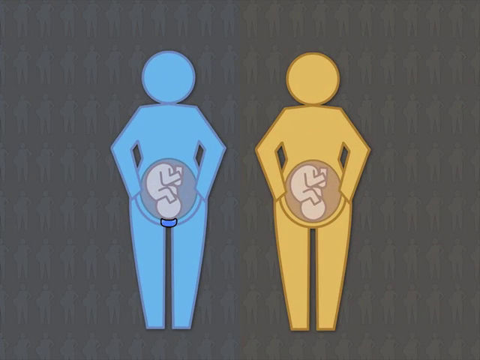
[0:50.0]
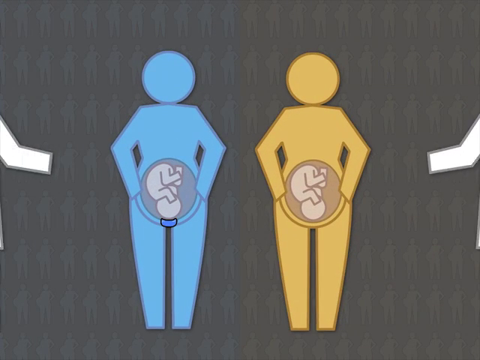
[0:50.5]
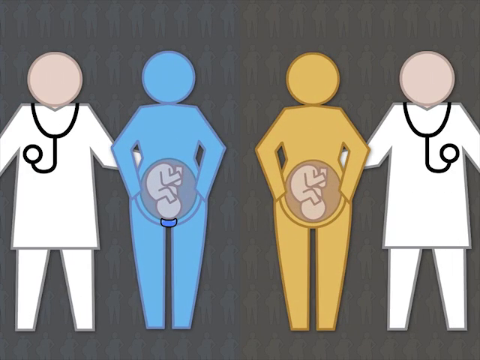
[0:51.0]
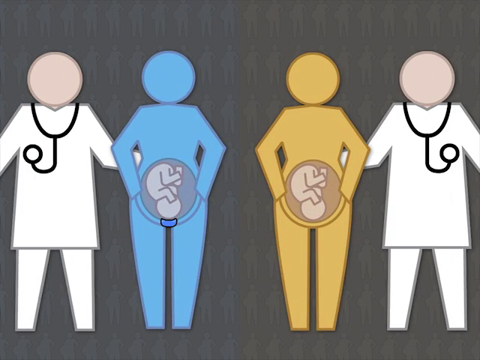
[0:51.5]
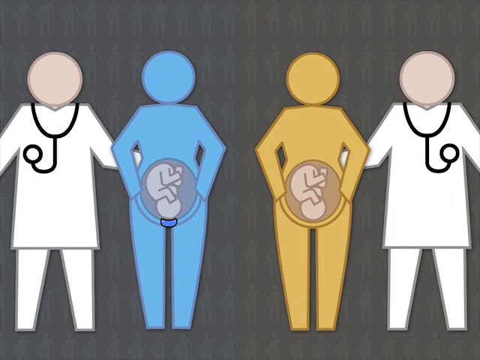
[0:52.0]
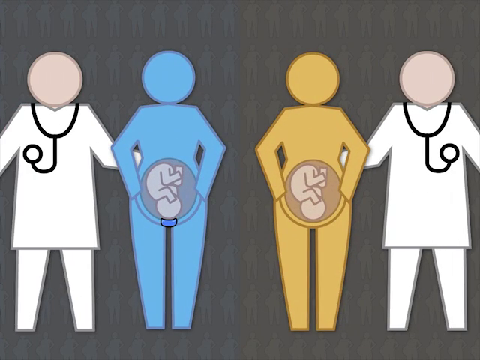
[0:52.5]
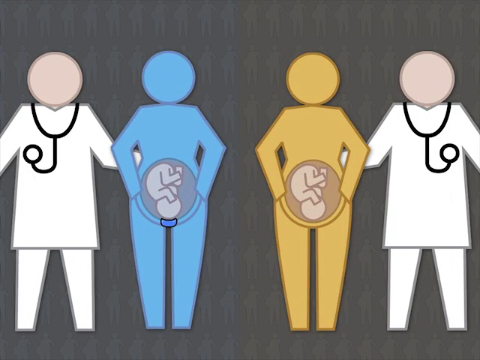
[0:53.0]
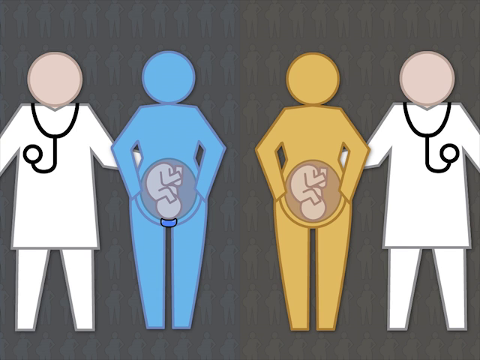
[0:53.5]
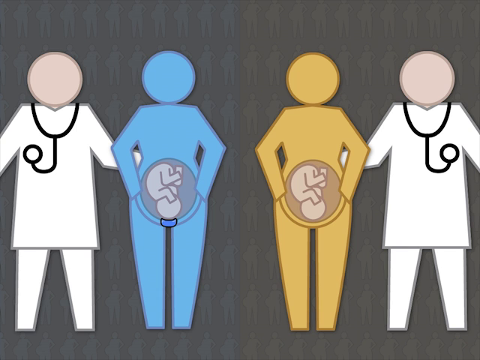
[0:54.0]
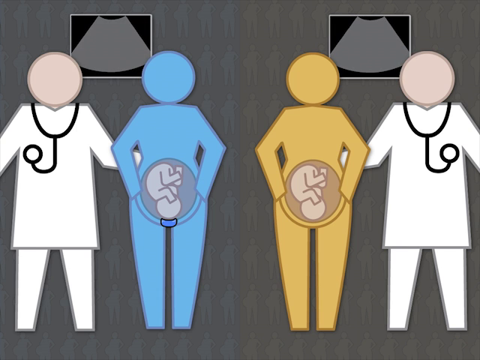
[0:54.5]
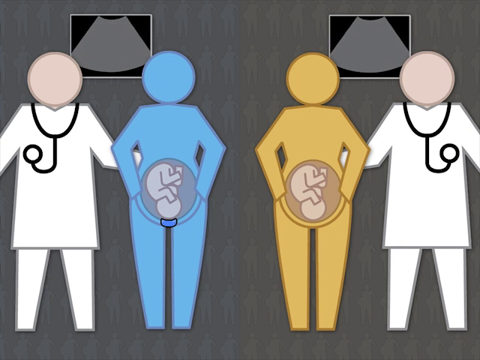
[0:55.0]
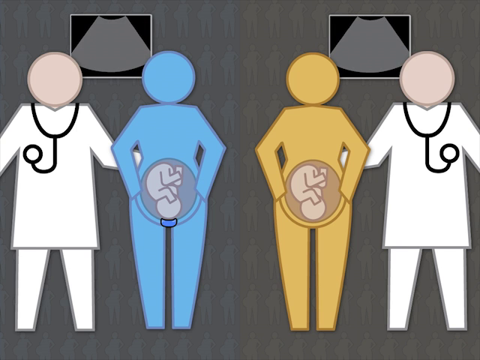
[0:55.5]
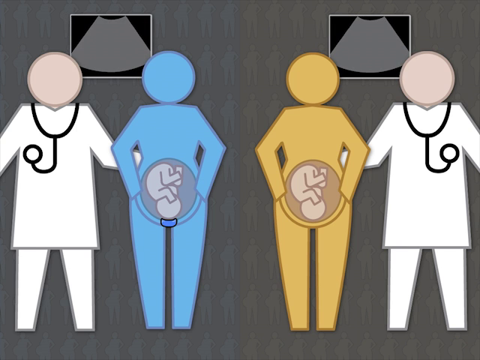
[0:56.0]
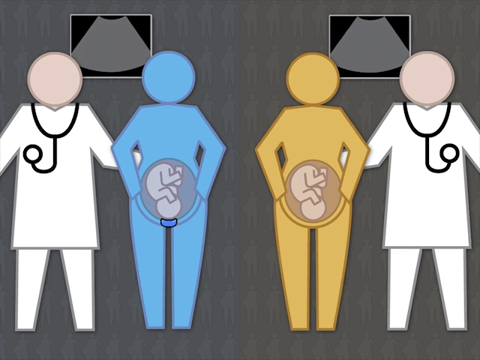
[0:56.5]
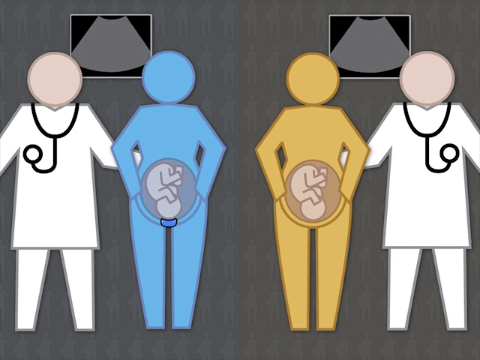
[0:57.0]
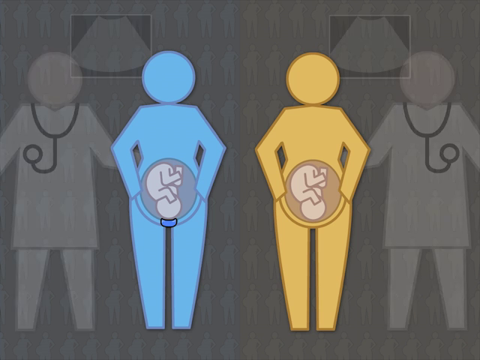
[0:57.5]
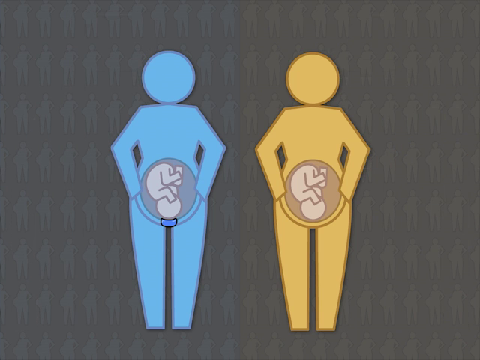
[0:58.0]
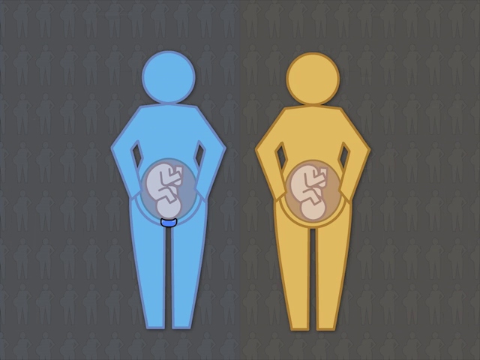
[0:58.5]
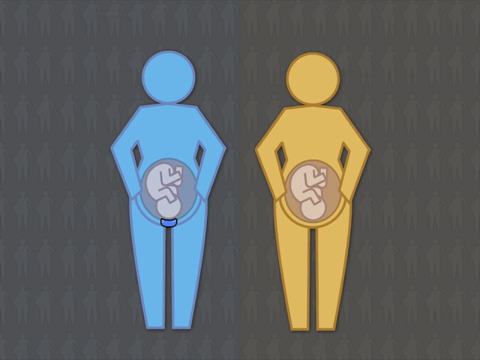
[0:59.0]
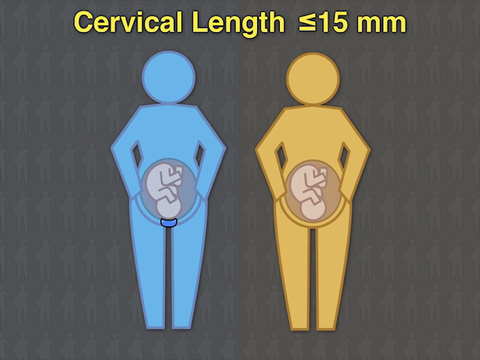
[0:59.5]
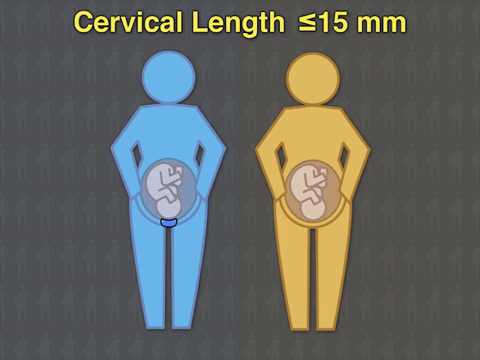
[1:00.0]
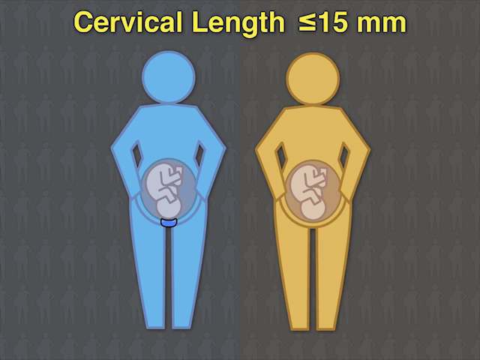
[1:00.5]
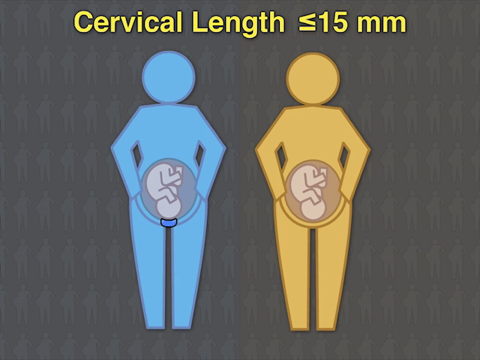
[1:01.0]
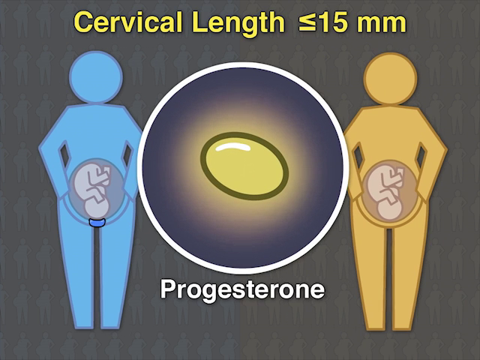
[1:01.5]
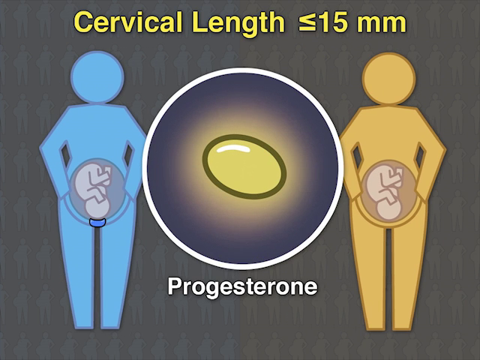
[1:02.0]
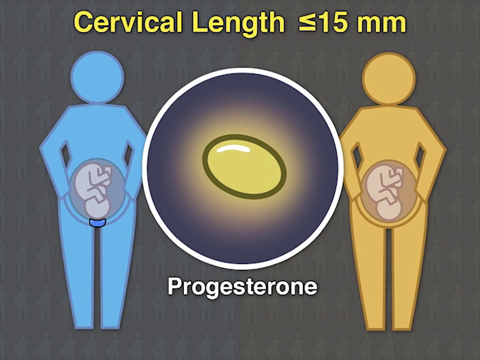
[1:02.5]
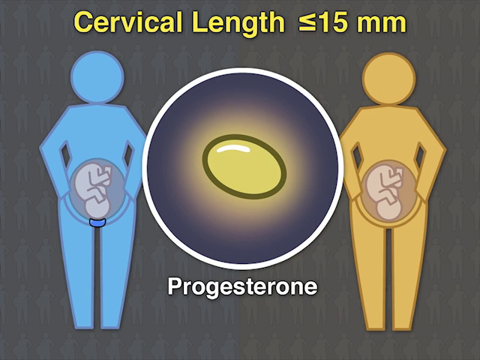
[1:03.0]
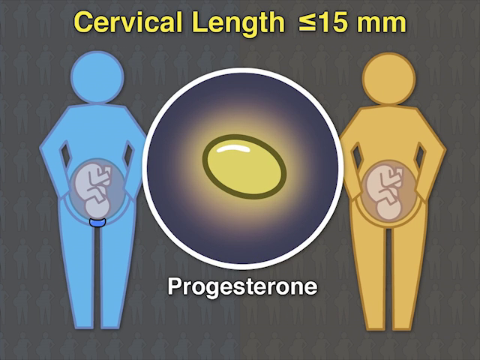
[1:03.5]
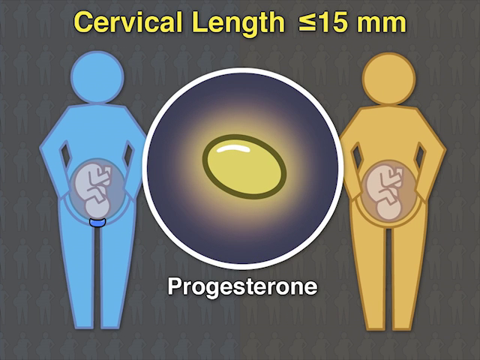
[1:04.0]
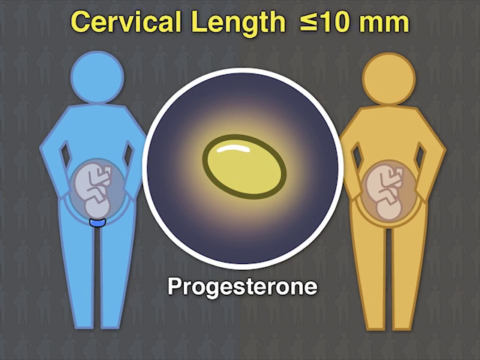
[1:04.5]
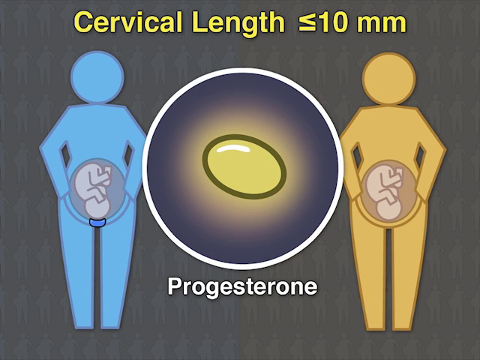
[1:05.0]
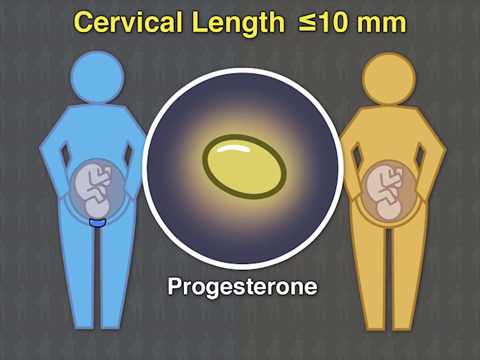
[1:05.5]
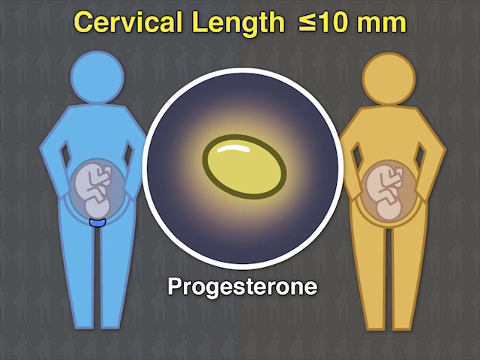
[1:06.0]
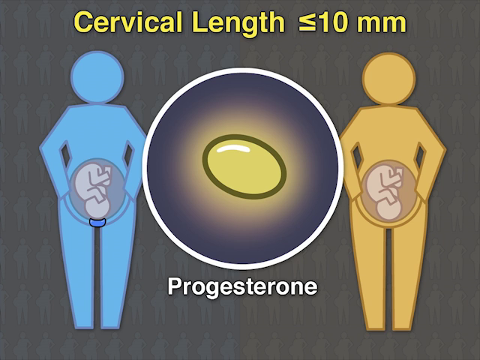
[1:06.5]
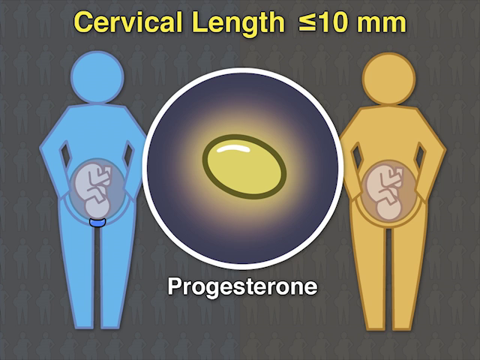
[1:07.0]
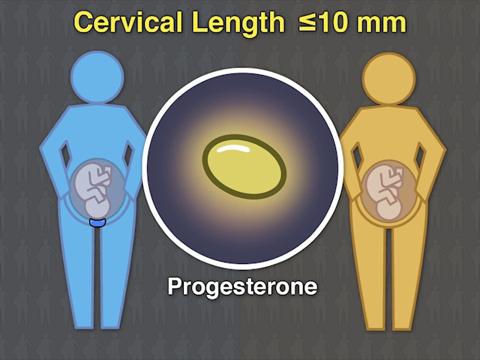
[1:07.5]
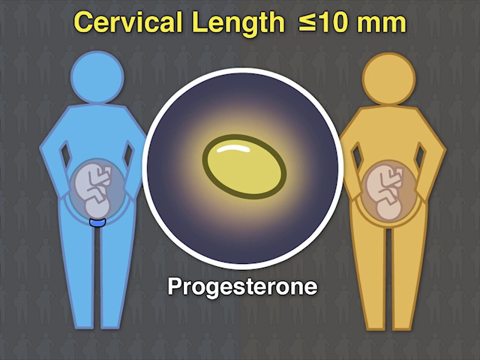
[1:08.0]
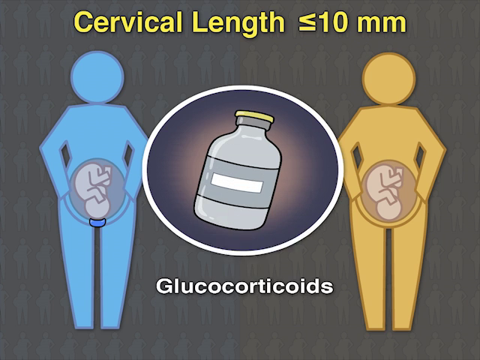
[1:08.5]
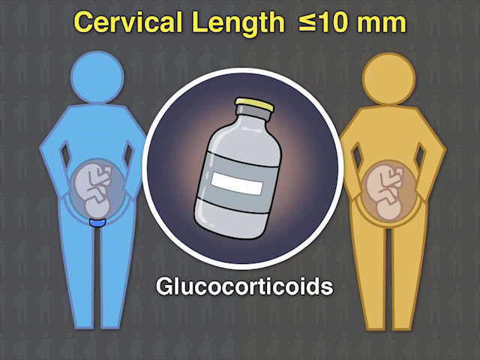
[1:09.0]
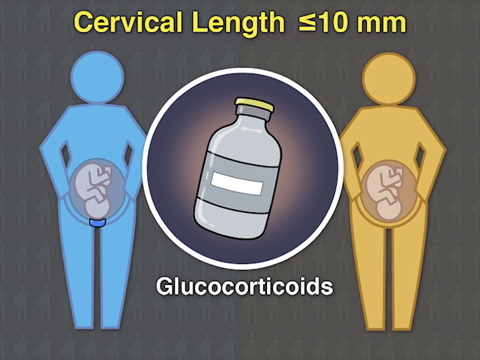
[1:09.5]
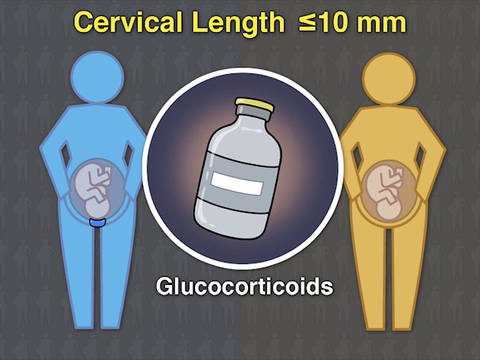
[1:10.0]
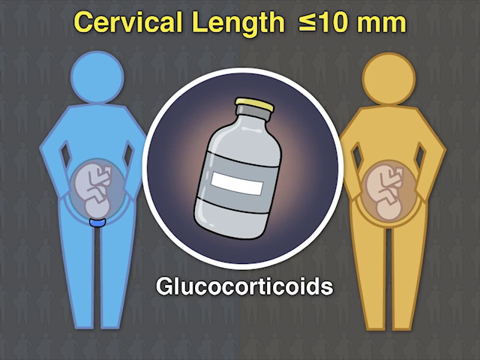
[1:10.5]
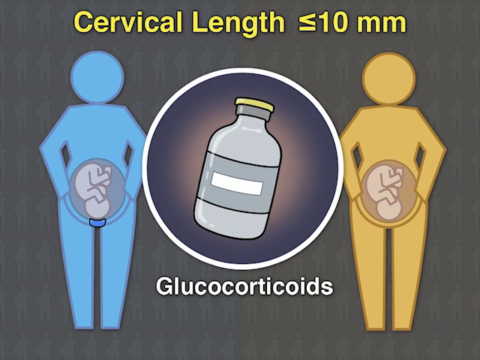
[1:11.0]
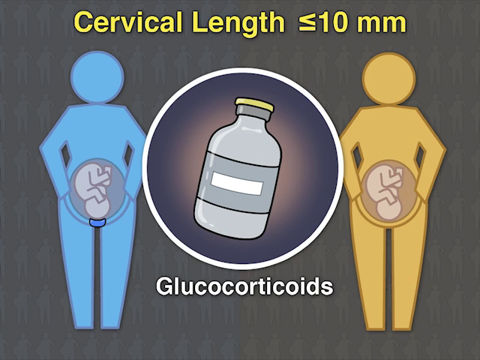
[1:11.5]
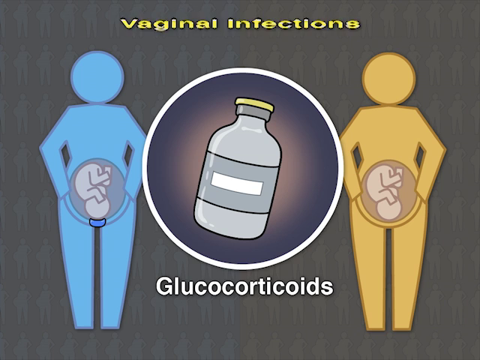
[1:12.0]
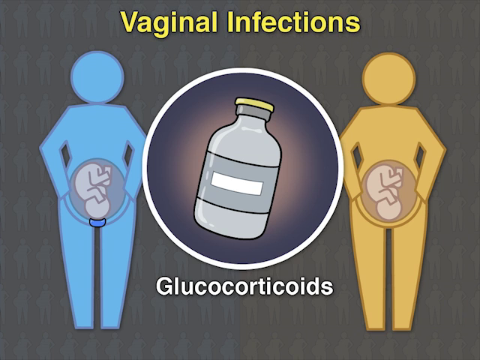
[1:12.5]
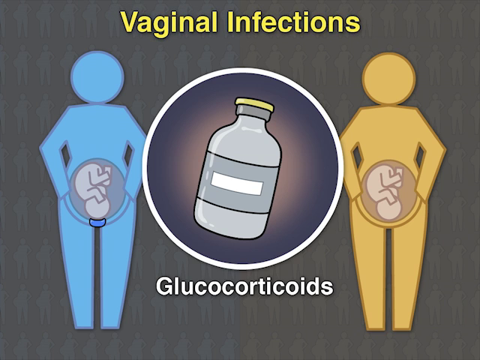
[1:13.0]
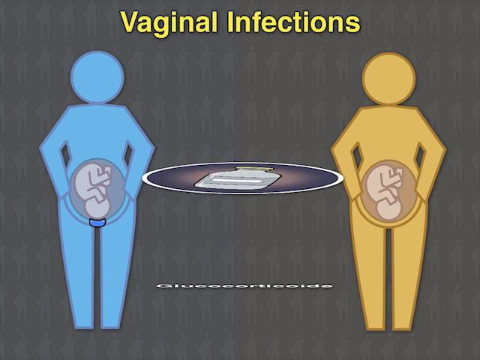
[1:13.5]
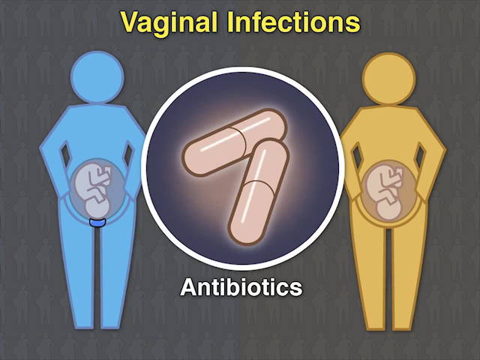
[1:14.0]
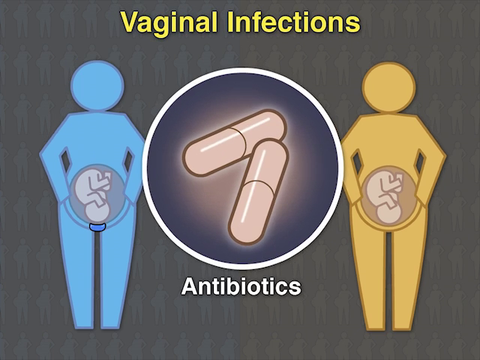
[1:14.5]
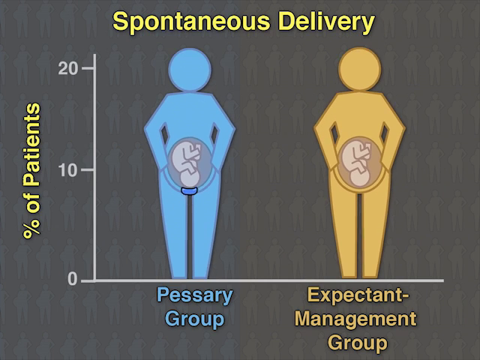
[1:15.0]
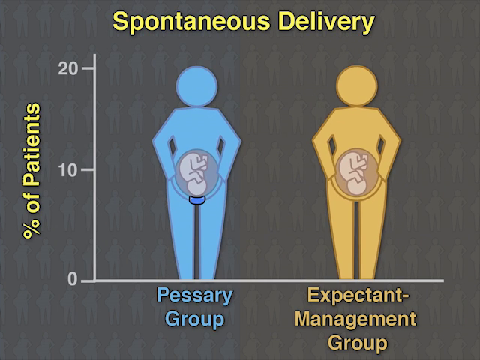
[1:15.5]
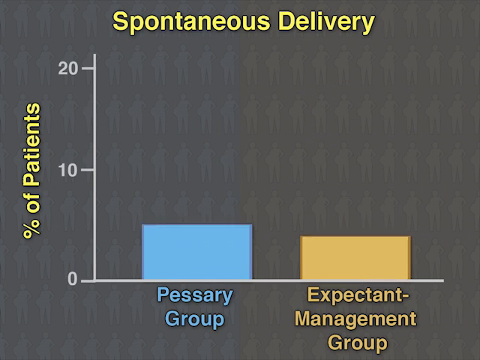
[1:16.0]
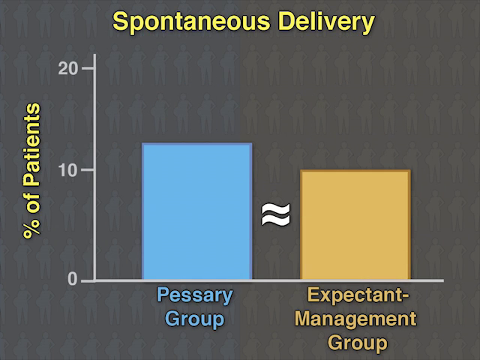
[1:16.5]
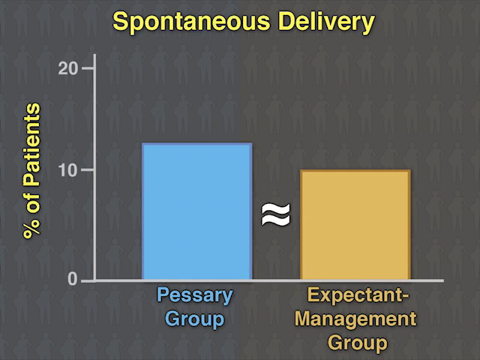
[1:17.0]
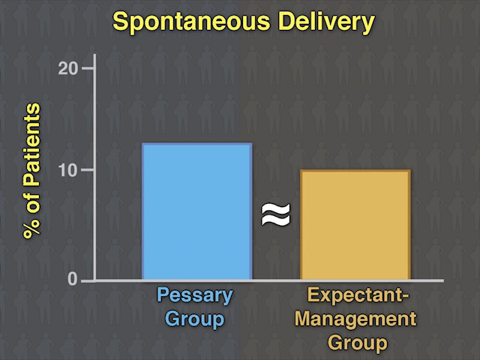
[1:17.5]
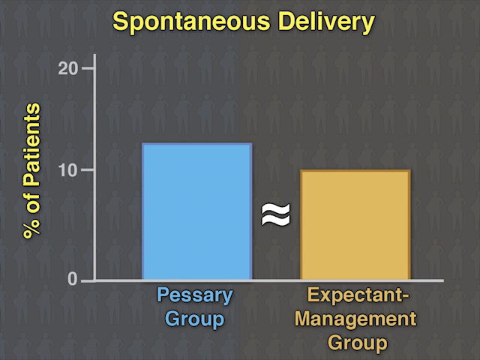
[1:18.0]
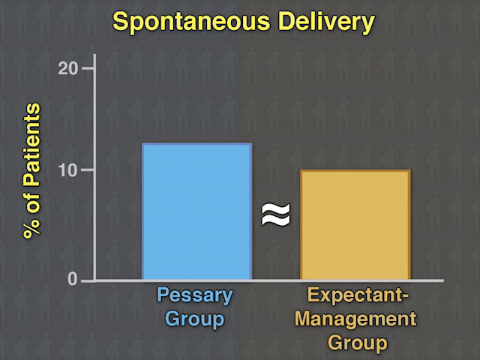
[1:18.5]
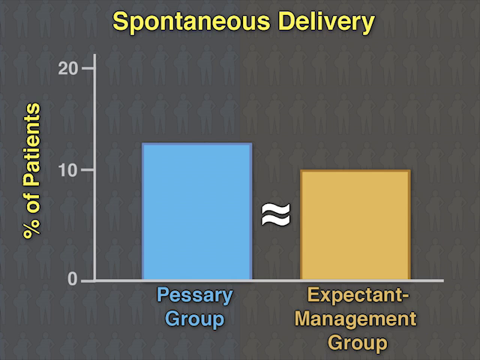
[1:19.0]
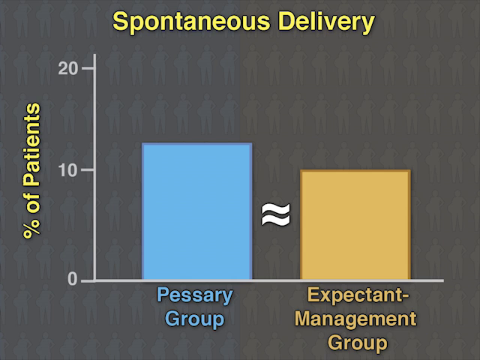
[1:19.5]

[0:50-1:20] The two generated images of women stand side by side, one in blue and one in yellow. Each has a baby in her stomach with its head facing down, and the one on the left, in blue, has a blue ring around the bottom where the cervix is. From the left and right sides, a figure in white with a stethoscope hanging off their neck appears, each putting an arm behind the woman they are standing next to. They all look like cutouts. A square appears on the wall behind them that looks like an x-ray image, but the x-ray is empty, just a gray section. The background is completely gray. Text at the top reads "cervical length less than or equal to 15 millimeters". A circle then appears in the center, pushing the women to the sides. The circle is white on the outside, and inside is what looks like a jelly bean that appears yellow and illuminated. Underneath it says "progesterone". The cervical length text at the top gets big and then shrinks back down for a second. The circle in the middle flips over to show a bottle with a yellow cap, with "glucocortisoids" underneath, and the text at the top switches to "vaginal infections". The circle flips over again, showing two capsules inside, with "antibiotics" underneath. The women are then transported into a graph titled "spontaneous delivery". The left side reads "percentage of patients", and the women are shown, one under the pessary group and the other under expectant management, with bars indicating the number of patients for the pessary group and the management group.